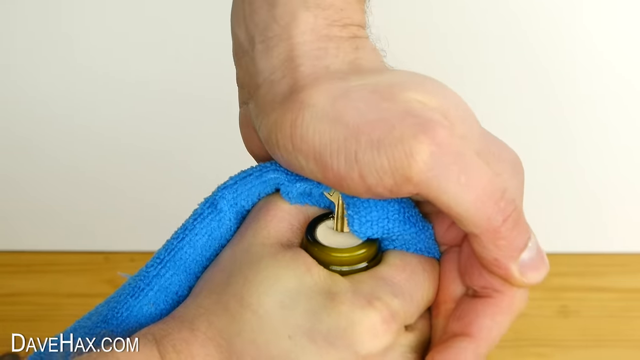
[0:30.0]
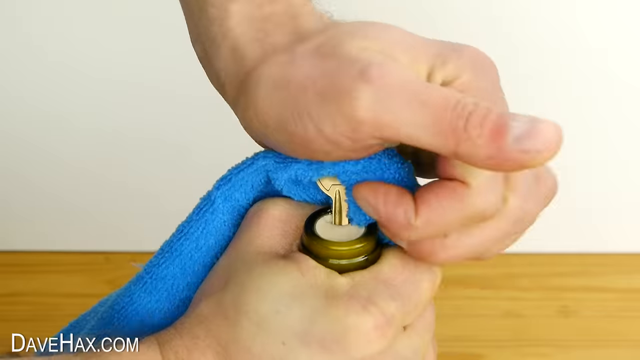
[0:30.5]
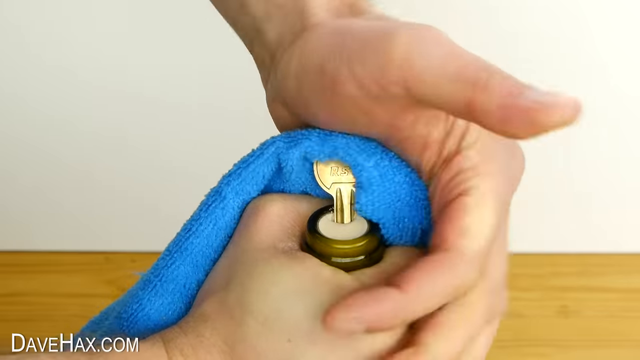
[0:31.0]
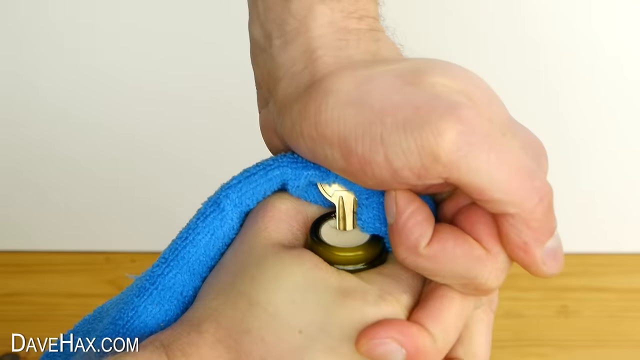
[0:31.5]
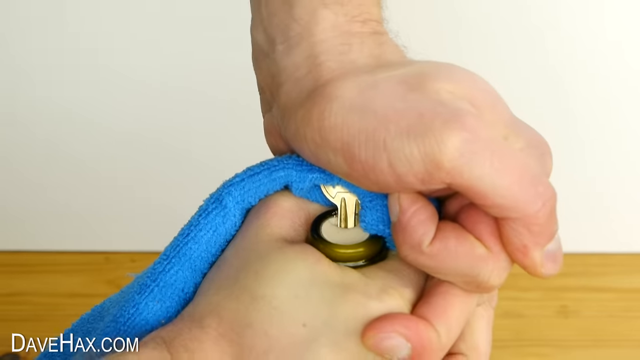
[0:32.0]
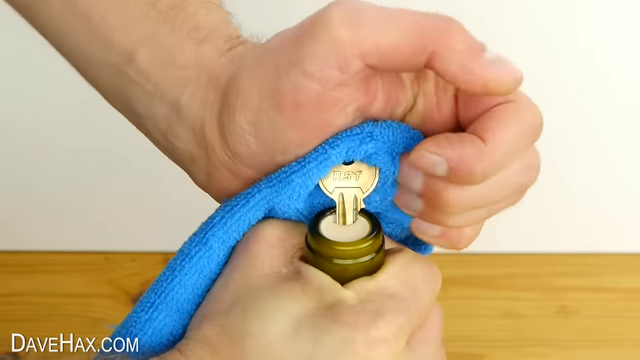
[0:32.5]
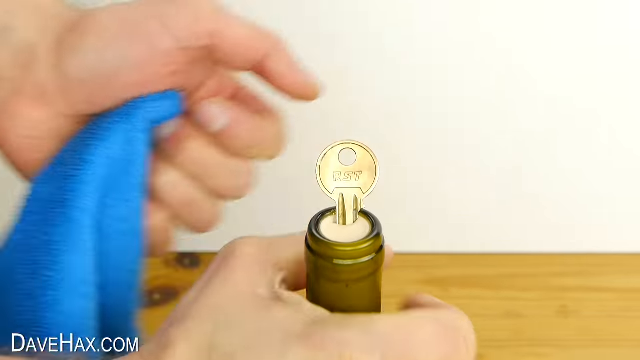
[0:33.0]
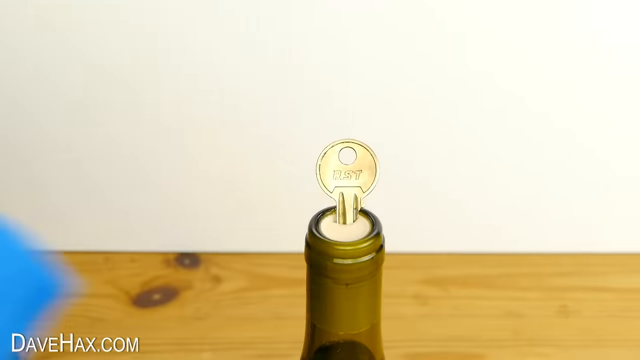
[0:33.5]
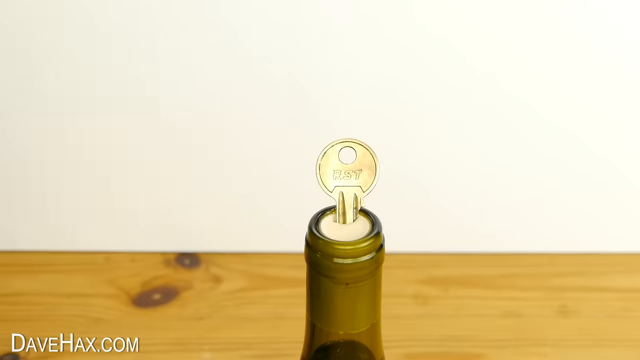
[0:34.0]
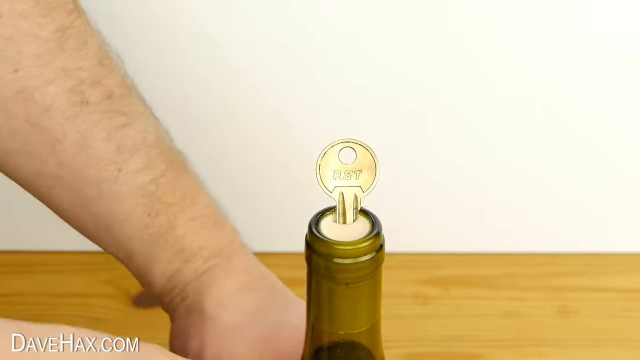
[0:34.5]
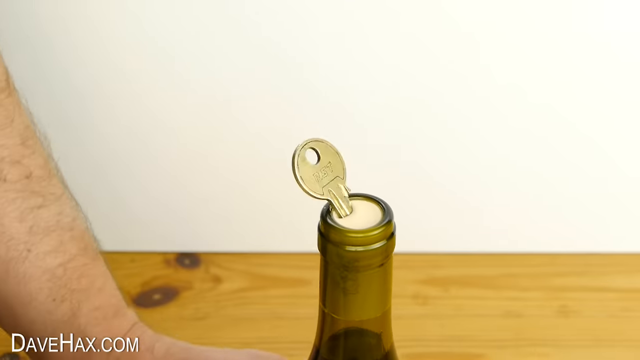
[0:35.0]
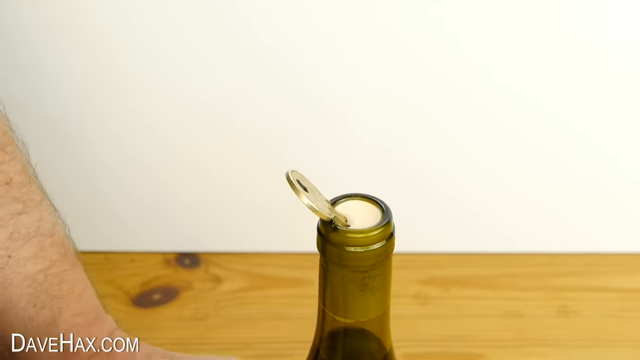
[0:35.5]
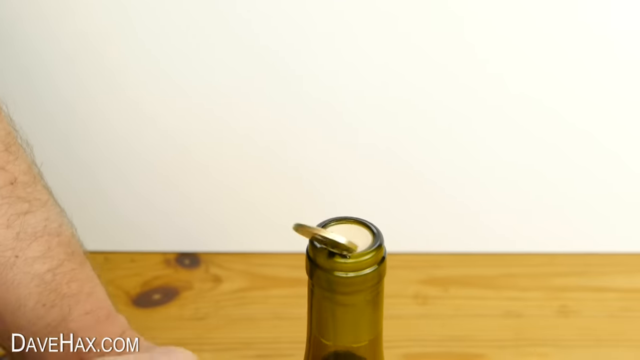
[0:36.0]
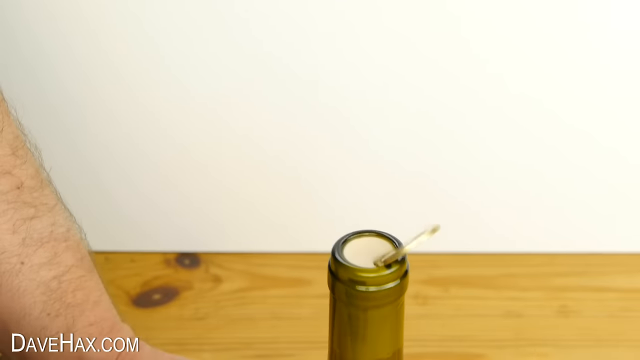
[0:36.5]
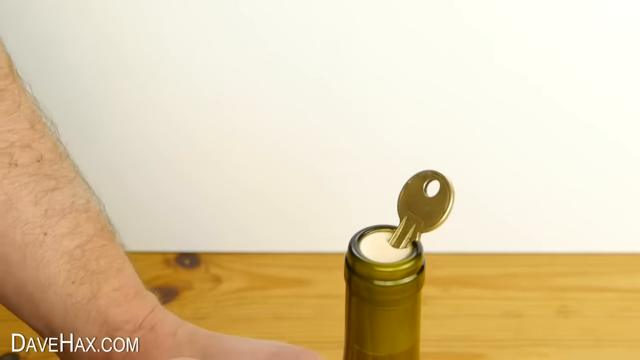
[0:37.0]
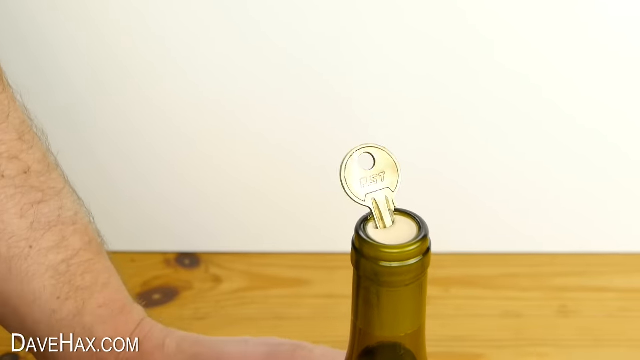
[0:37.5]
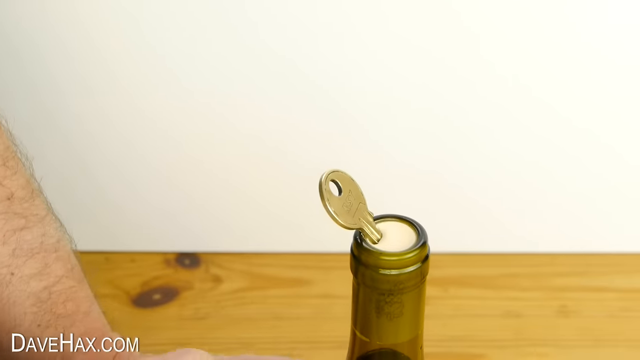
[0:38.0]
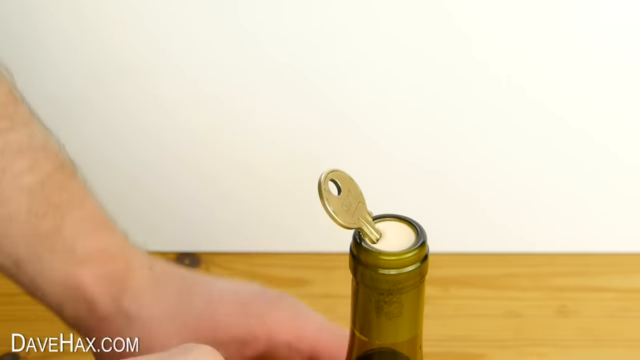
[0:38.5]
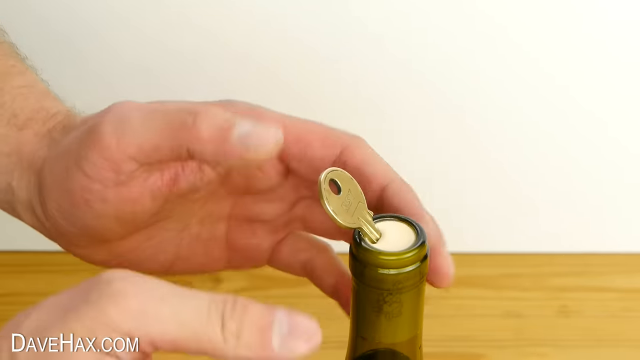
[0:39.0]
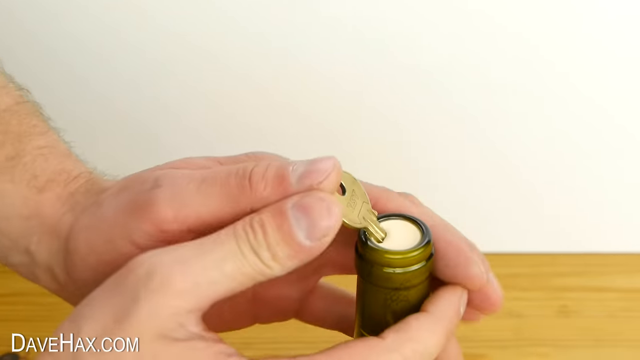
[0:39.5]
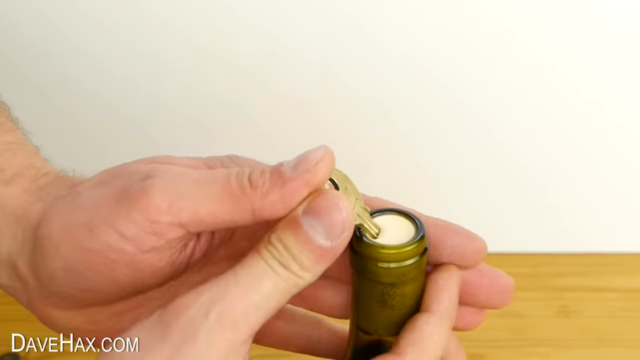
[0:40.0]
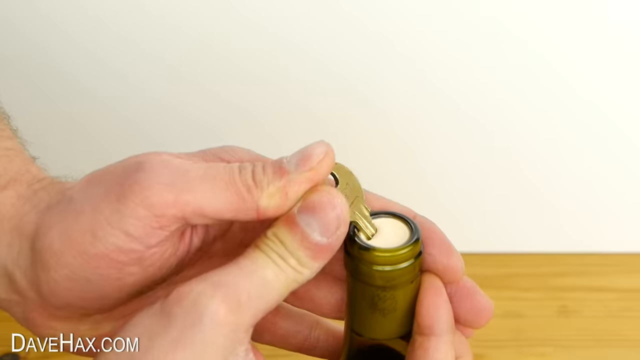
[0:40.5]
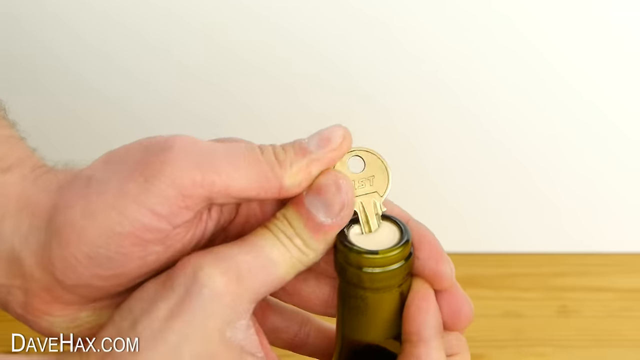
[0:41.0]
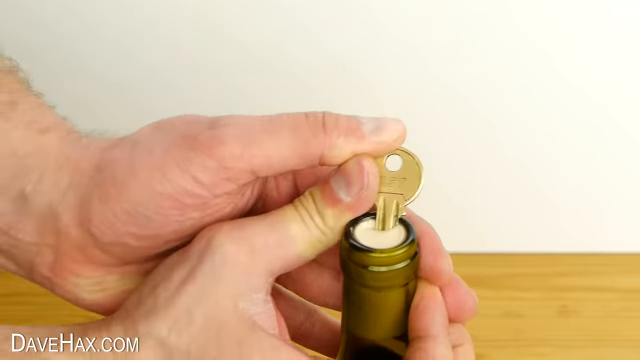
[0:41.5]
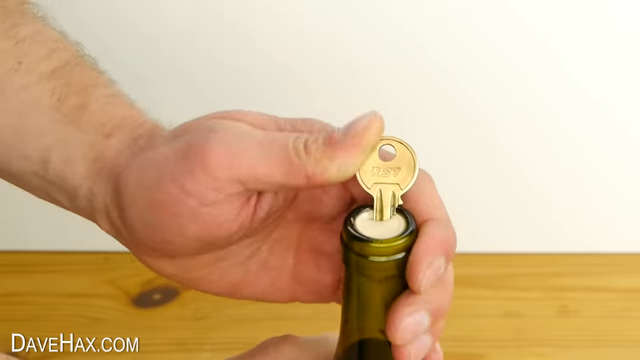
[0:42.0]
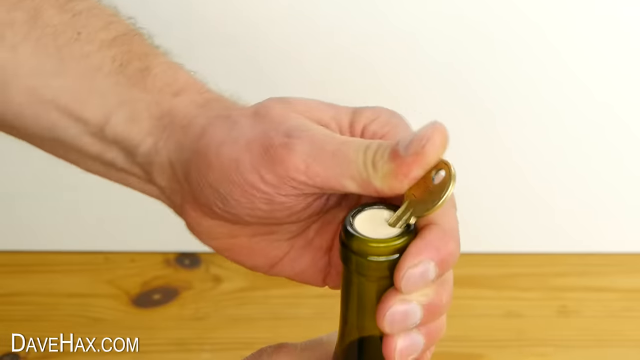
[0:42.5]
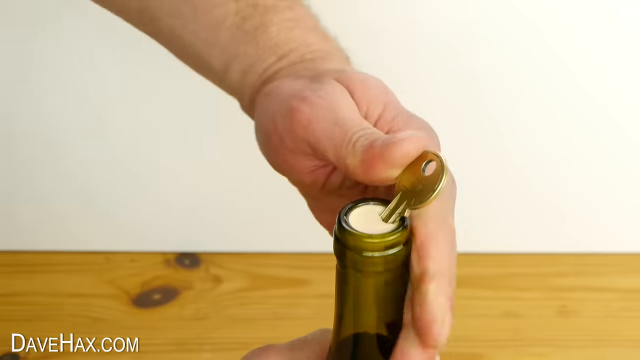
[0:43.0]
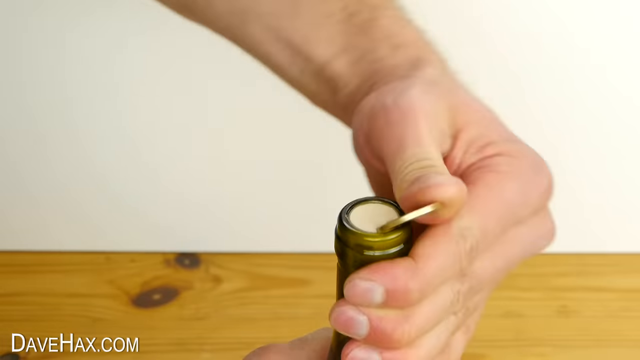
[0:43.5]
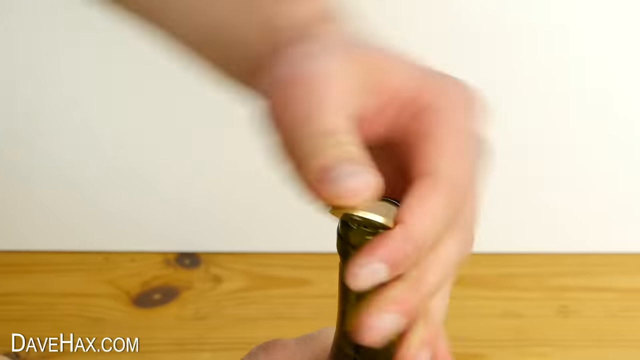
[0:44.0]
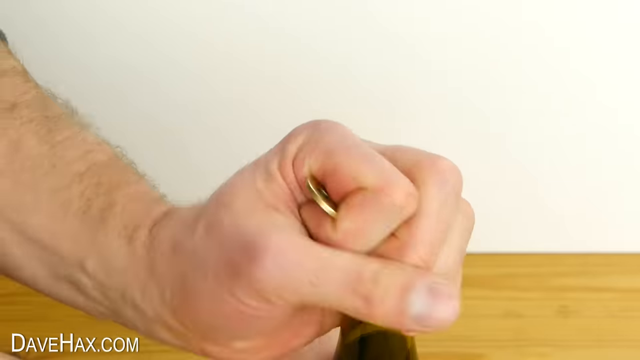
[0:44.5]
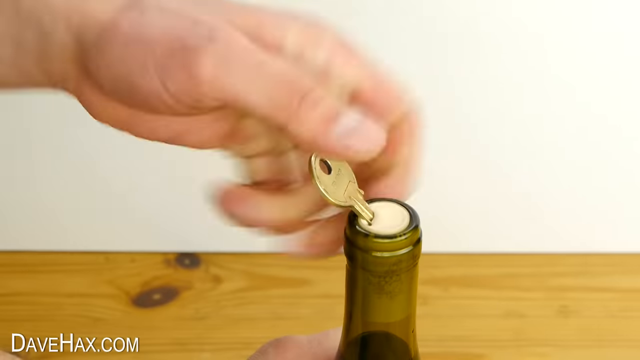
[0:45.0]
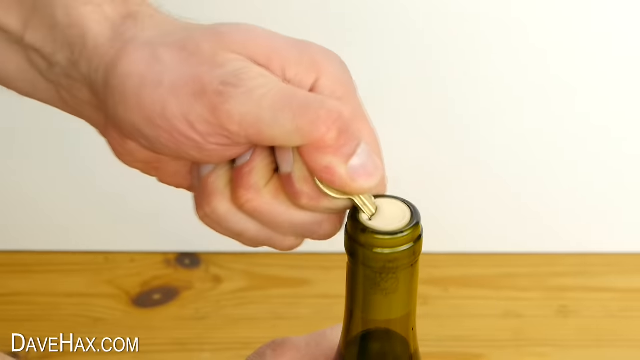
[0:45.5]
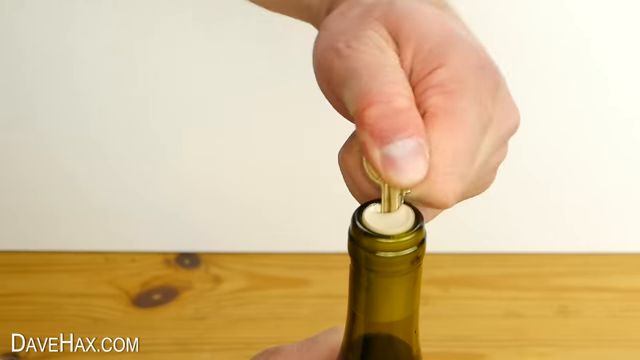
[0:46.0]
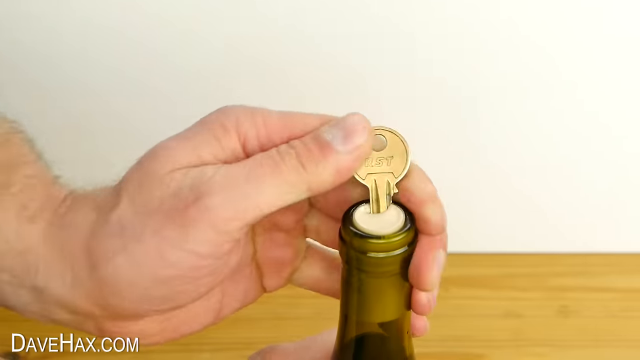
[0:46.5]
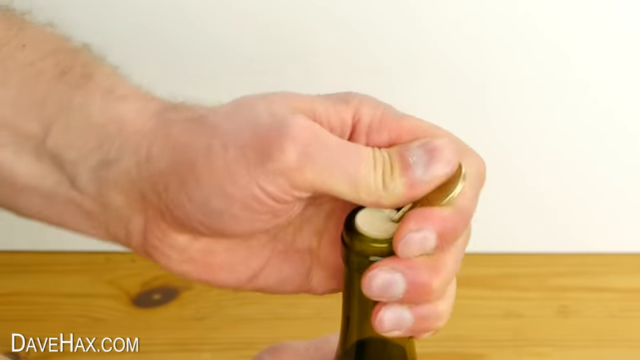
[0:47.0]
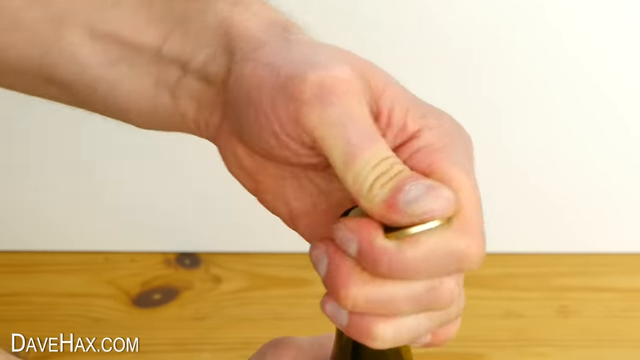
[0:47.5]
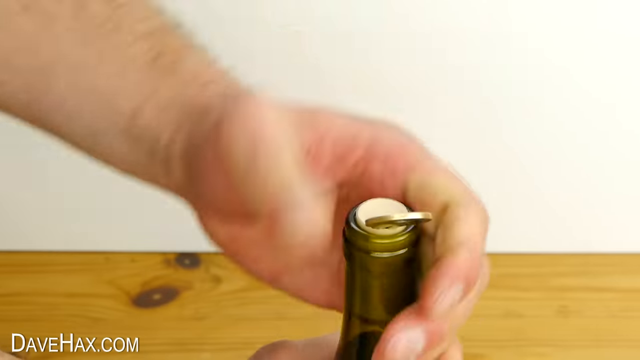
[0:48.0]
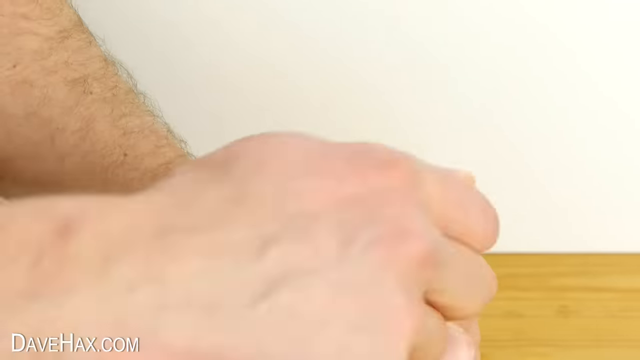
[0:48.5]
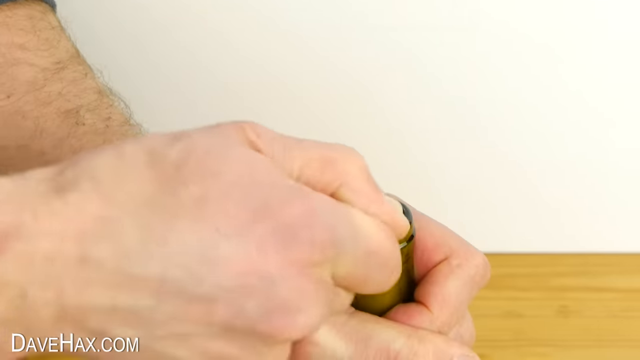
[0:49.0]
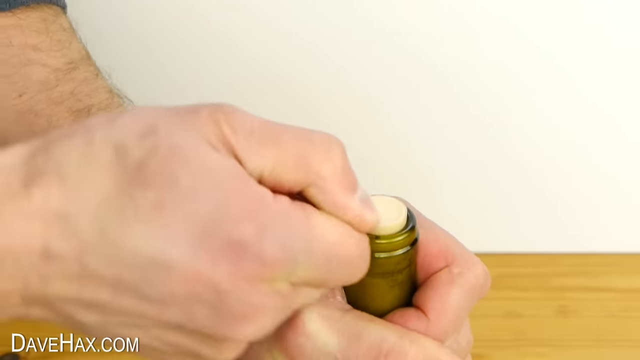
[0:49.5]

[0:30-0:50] The man presses the key into the cork very hard. As he turns the bottle around, the key is visibly pressed in to the side, going in at an angle rather than straight down, and it does not look bent. He turns the key clockwise, and the cork comes up. The text "davehax.com" is still shown. The video is in landscape orientation.